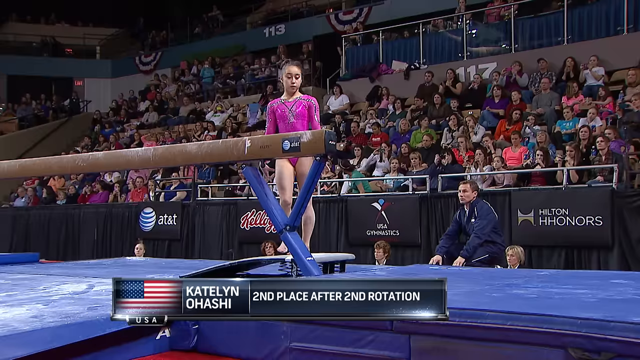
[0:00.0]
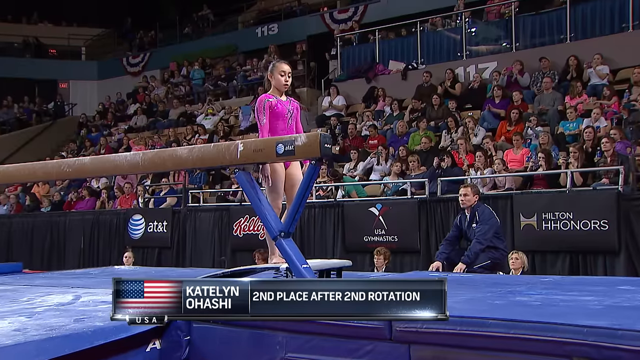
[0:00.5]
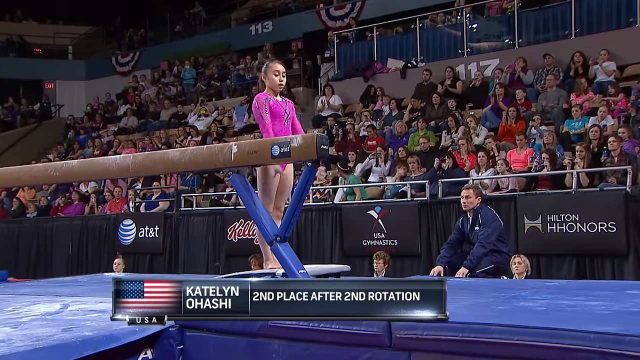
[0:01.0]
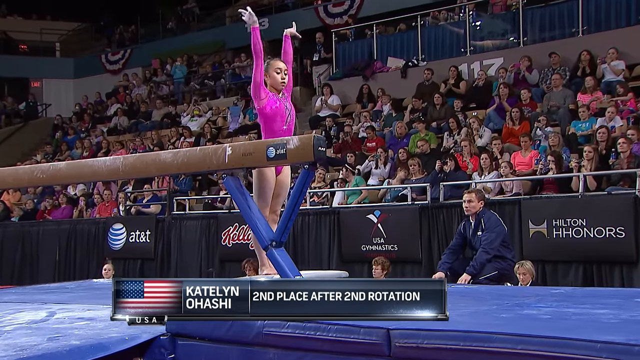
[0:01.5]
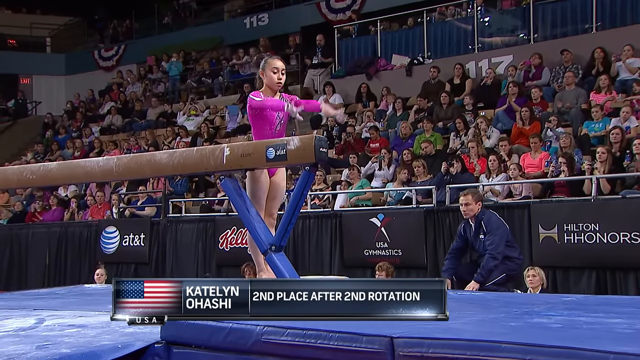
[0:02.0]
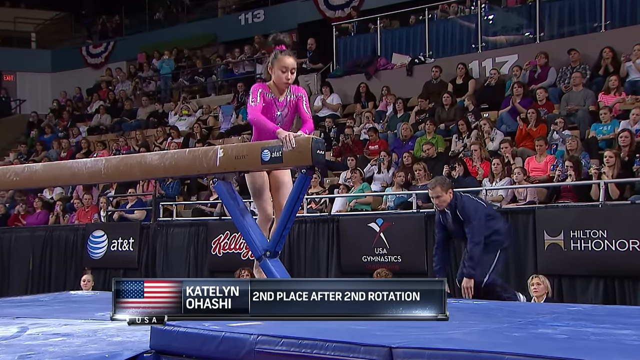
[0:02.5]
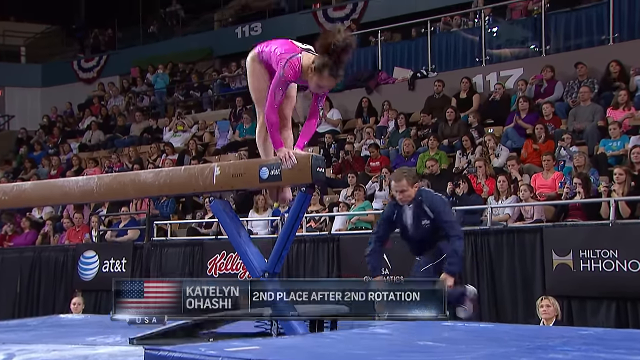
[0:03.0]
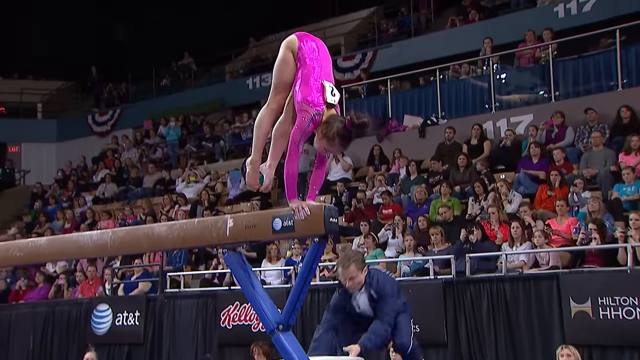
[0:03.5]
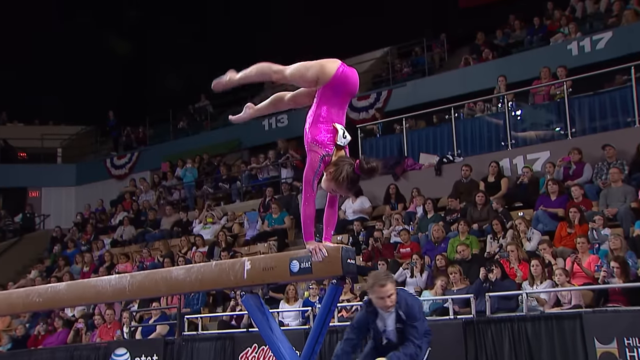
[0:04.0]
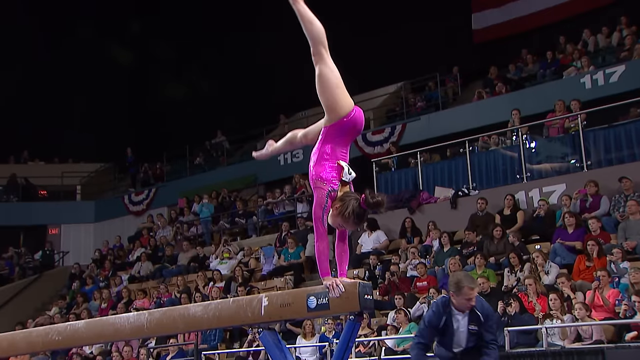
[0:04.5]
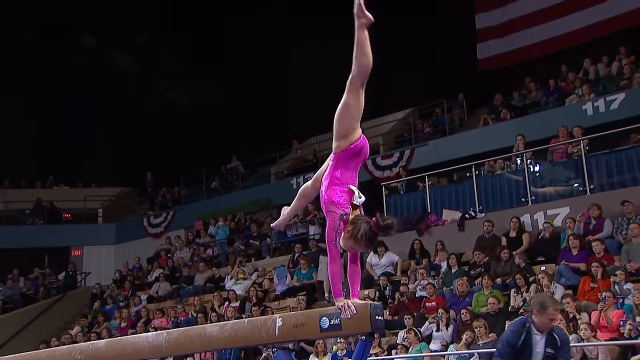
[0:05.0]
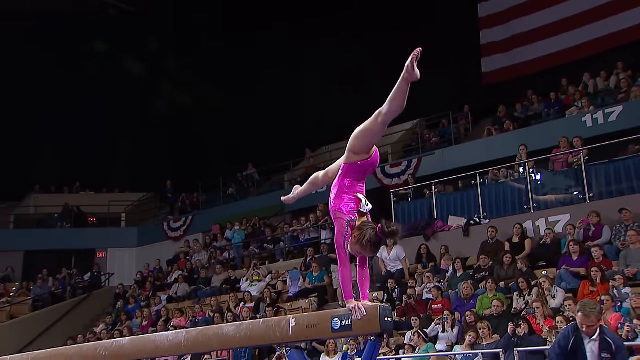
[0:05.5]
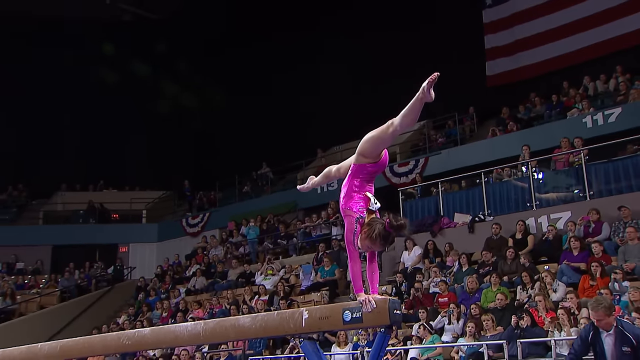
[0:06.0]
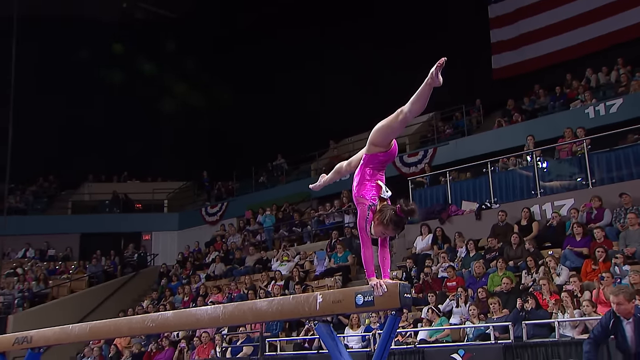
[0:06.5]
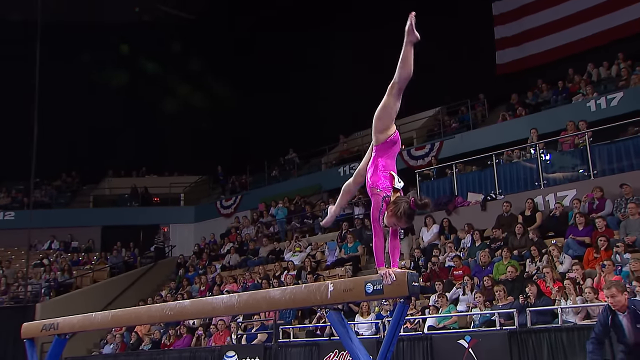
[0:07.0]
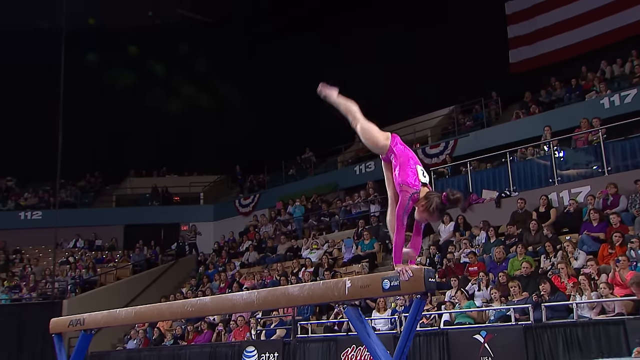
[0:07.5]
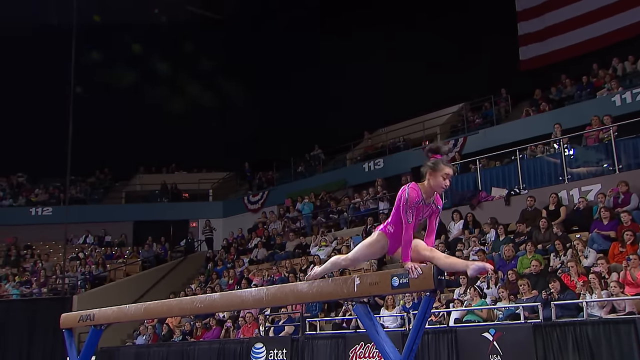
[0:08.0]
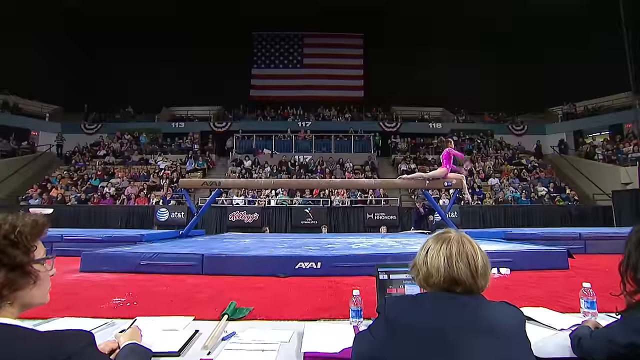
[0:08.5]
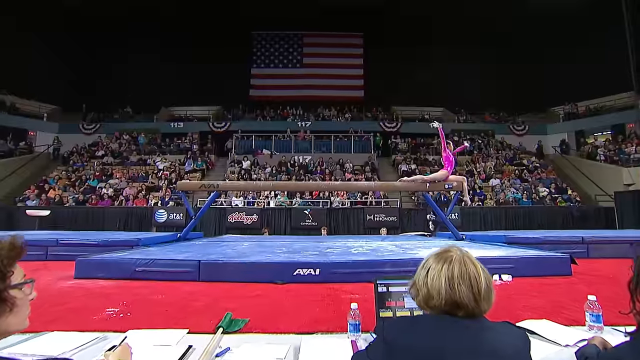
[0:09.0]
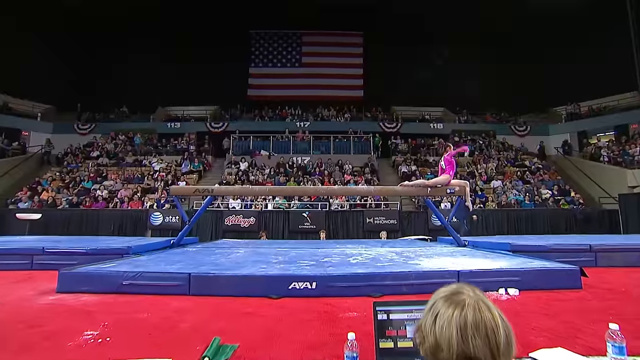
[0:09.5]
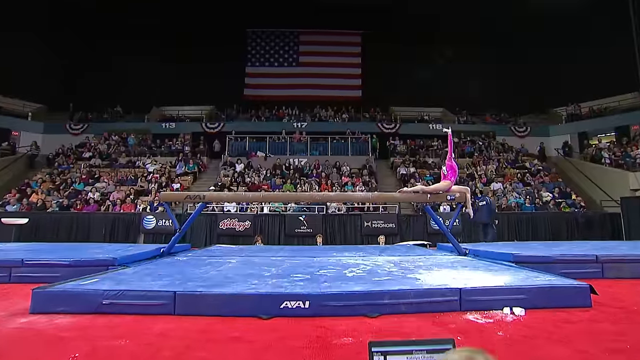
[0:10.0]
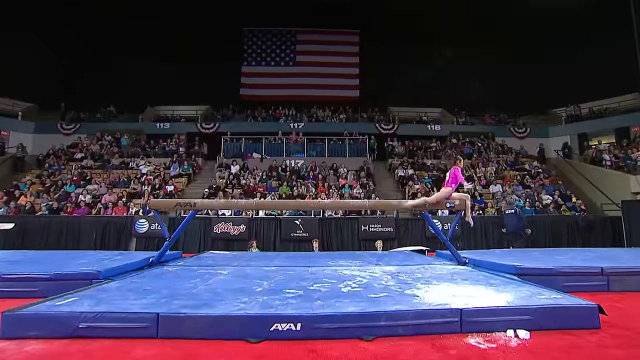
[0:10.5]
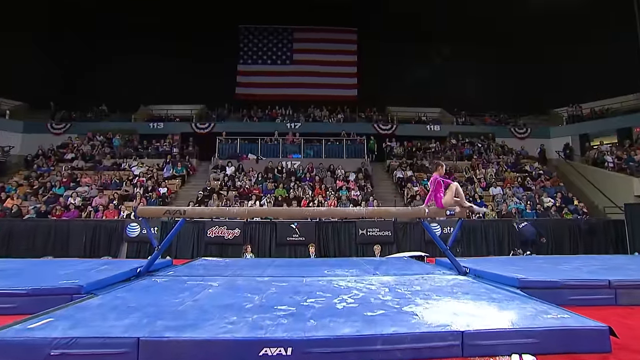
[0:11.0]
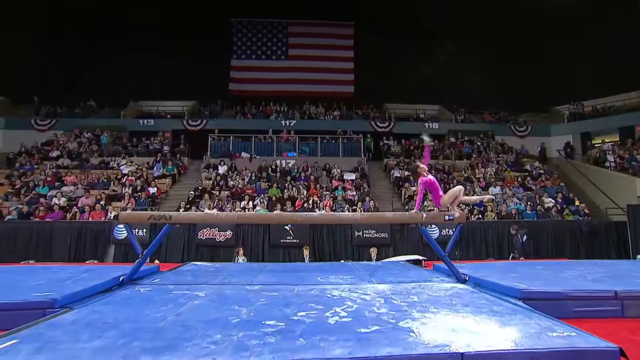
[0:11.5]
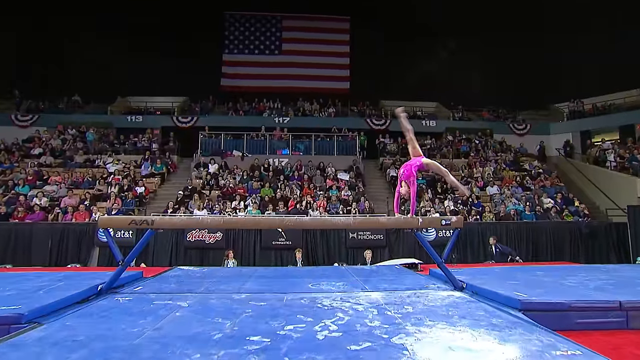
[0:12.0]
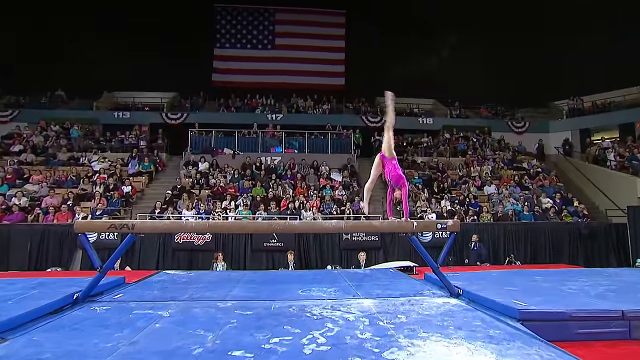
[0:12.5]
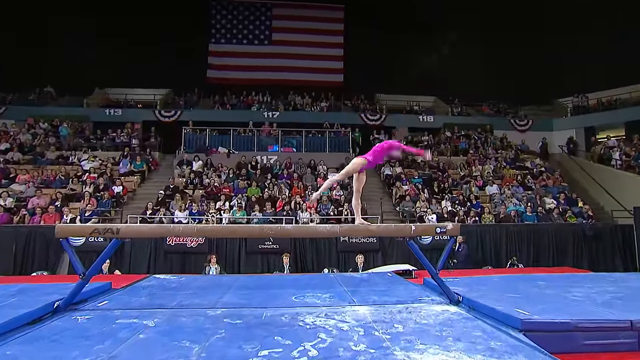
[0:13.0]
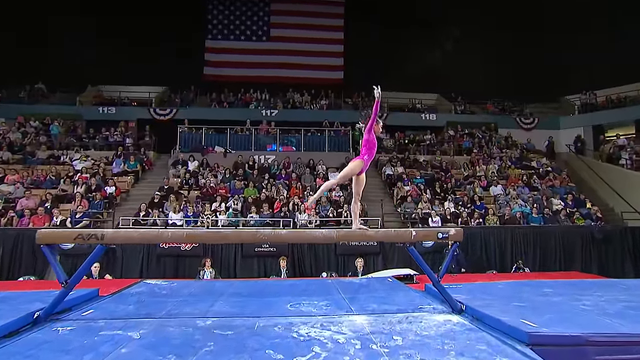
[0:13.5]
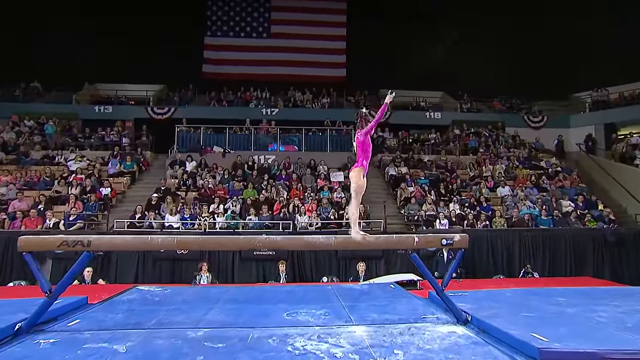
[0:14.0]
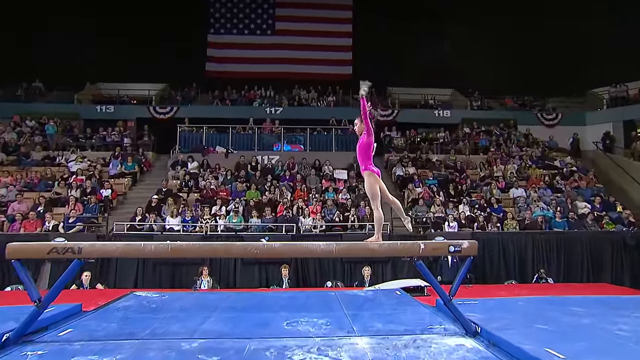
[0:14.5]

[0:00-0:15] What appears to be a gymnast gets up on top of a beam, plants her hands on the beam, sticks her legs in the air, and flips backwards. She is wearing a purple suit and has a number posted on her back. There is an audience of many people. Underneath the gymnast are blue cushion mats. In the background there appear to be signs for sponsors: AT&T, Kellogg's, USA Gymnastics, and Hilton HHonors. At the very top back is a large red, white, and blue American flag. The audience appears to be arranged in two or three levels: a bottom section, a middle section, and a top section. There are judges in front of the gymnast, and there appear to be judges behind her as well, scoring from either side.